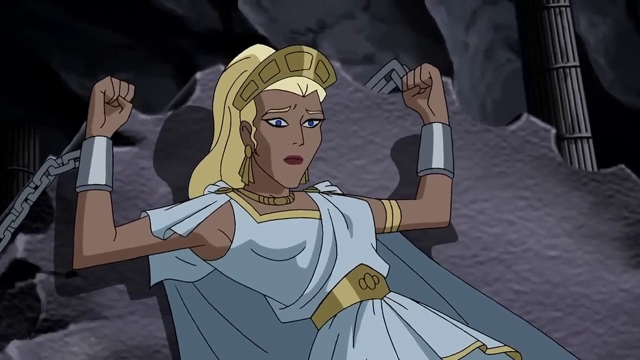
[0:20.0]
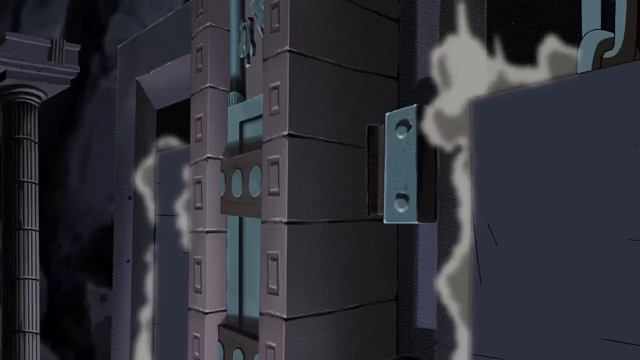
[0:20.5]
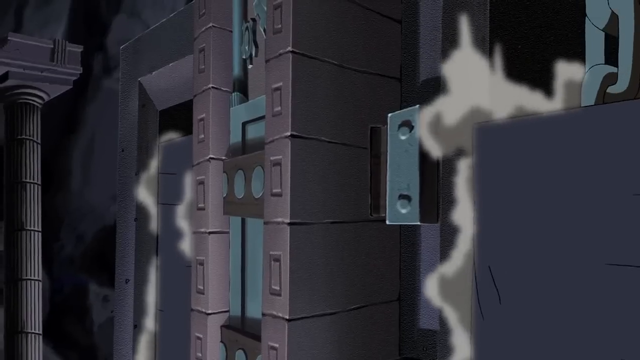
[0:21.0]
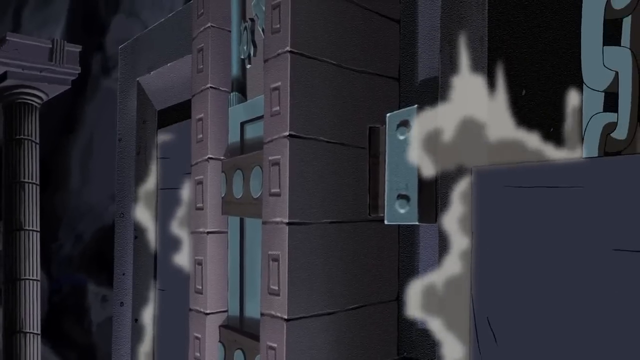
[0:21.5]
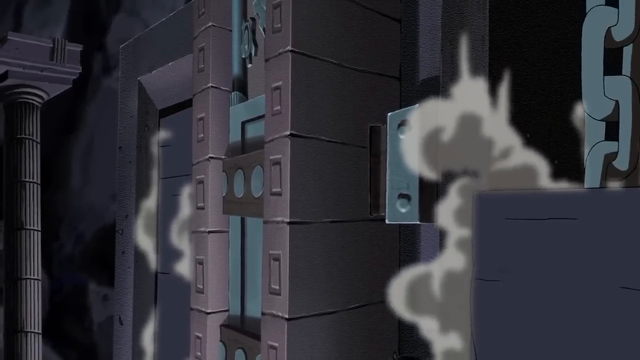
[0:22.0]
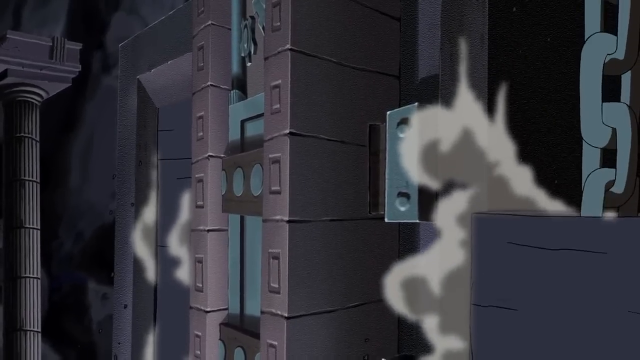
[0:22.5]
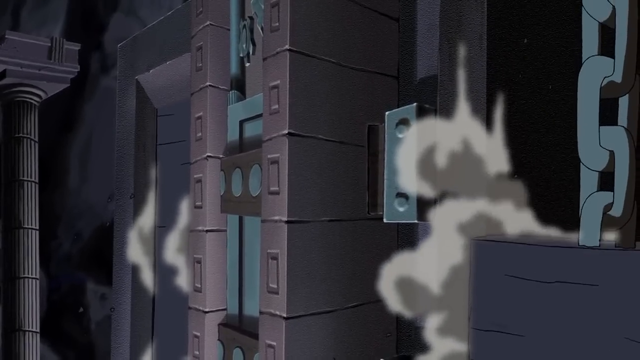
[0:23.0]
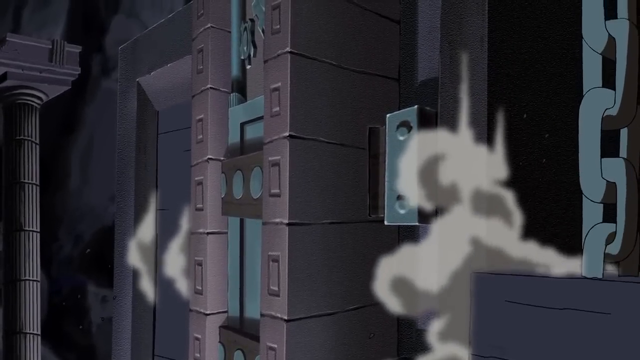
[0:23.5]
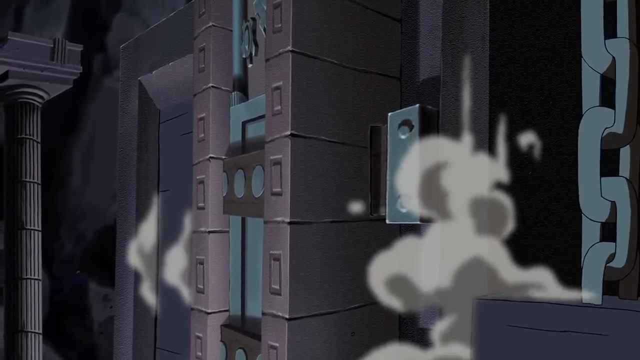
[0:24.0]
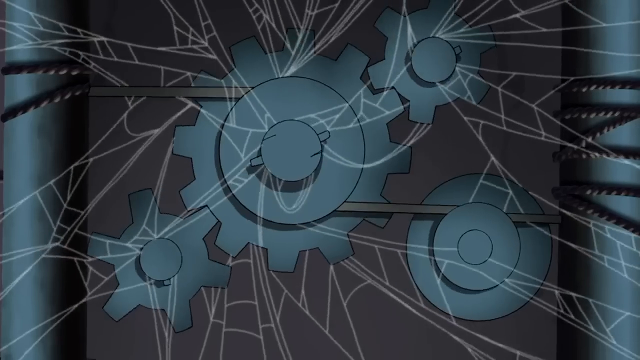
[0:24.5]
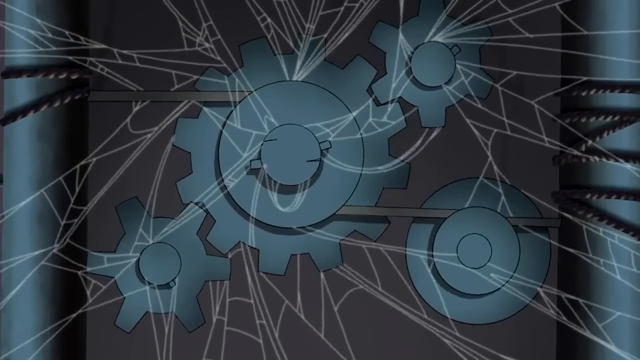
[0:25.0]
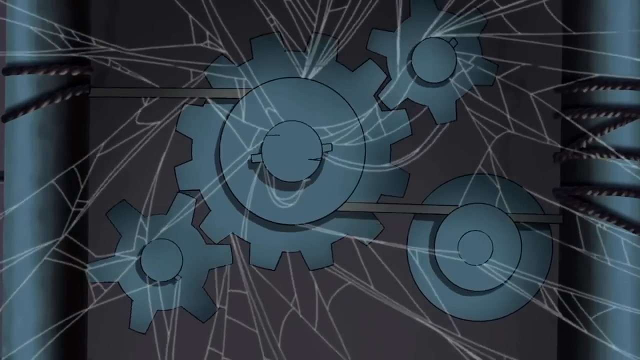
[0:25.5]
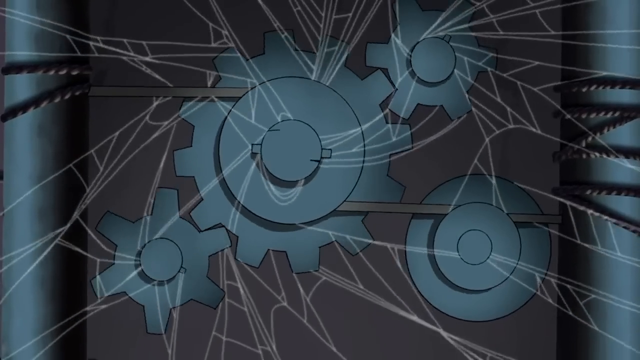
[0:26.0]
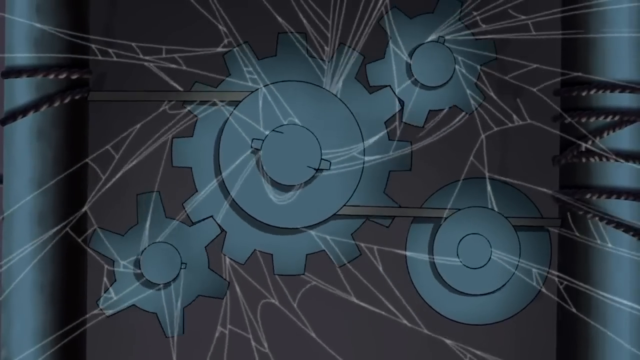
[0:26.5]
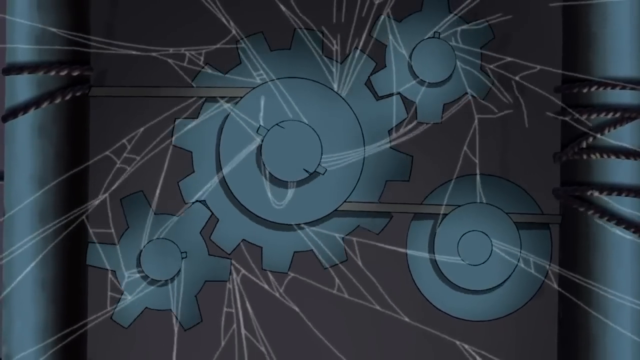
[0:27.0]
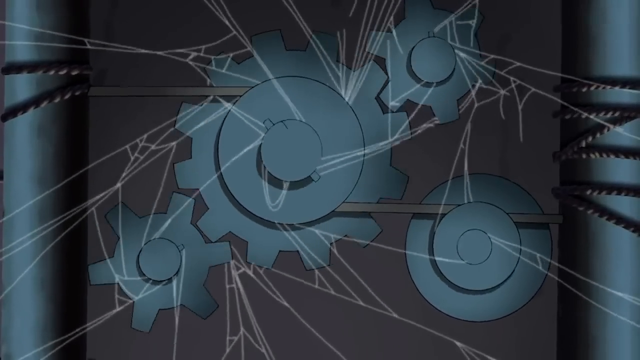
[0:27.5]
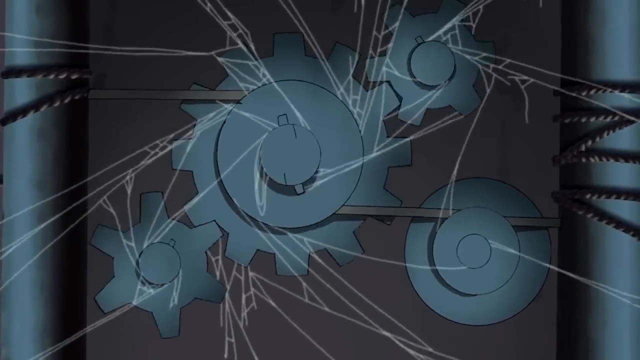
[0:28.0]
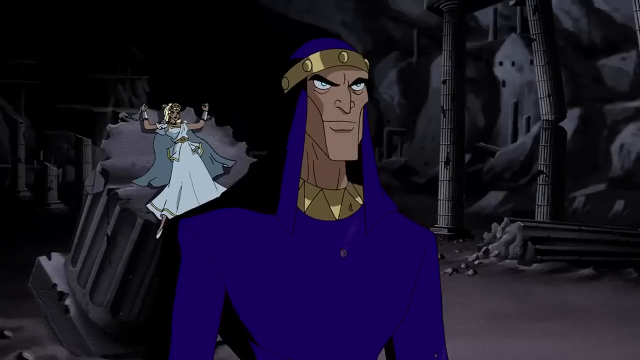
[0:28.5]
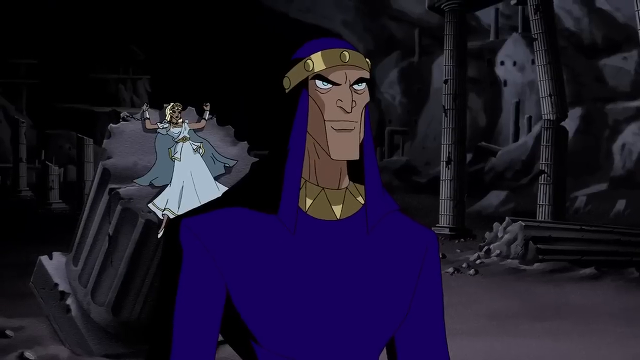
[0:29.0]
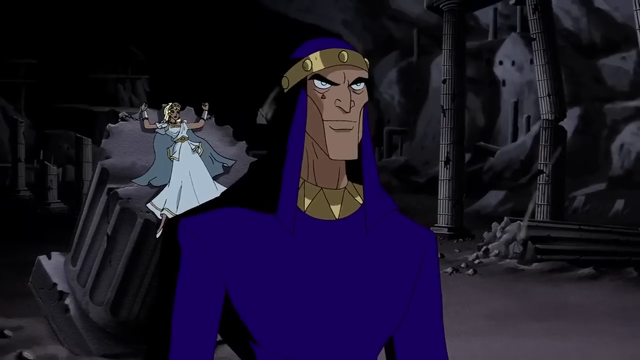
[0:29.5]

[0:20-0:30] The woman is handcuffed by her wrists and ankles to the top portion of a tilted column, with an angry look on her face. The scene changes to large weights attached to large chains dropping down from the ceiling toward the floor of the dungeon. The dungeon walls appear to be made of stone, some appearing light blue and some gray or pewter. Smoke comes from some openings in the wall; it is unclear whether they are doorways or just open areas. In the background, a column is still standing straight up.